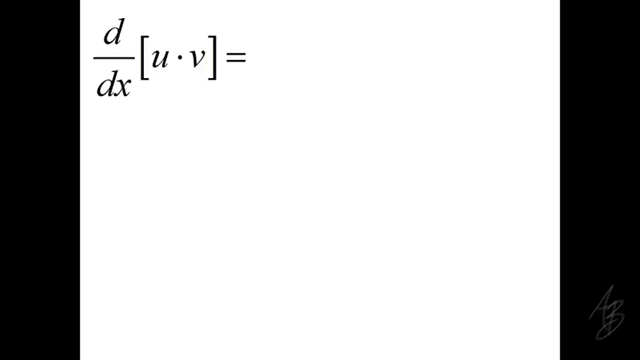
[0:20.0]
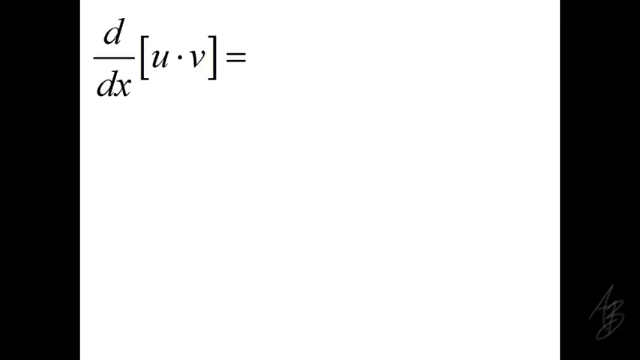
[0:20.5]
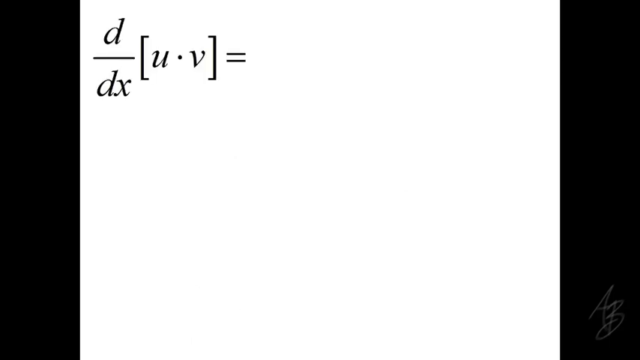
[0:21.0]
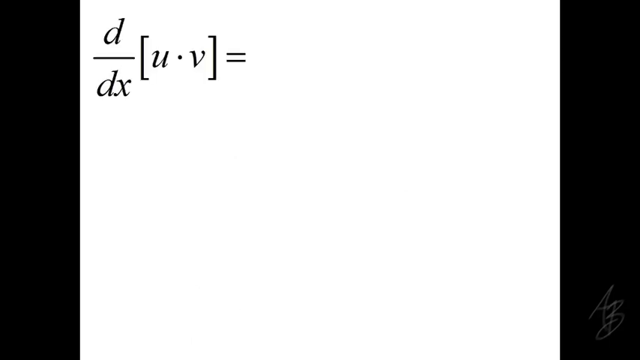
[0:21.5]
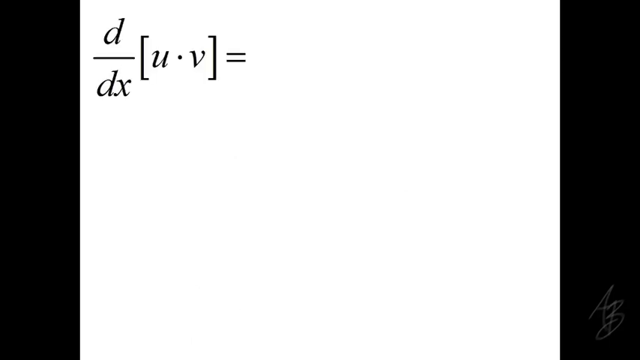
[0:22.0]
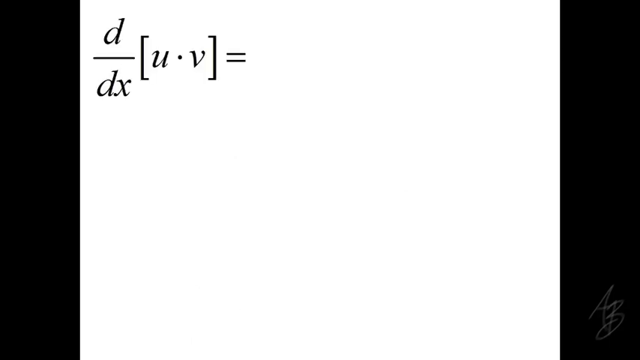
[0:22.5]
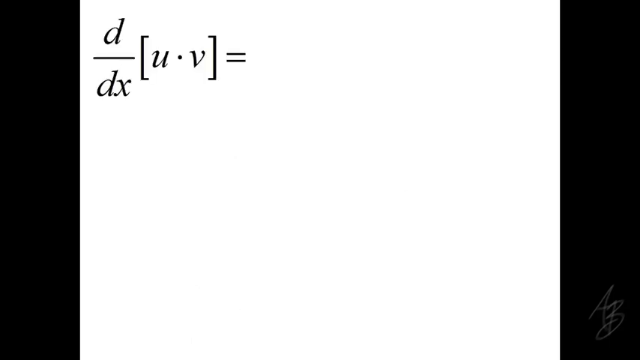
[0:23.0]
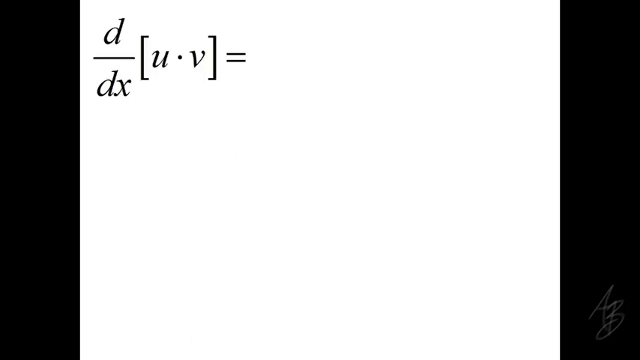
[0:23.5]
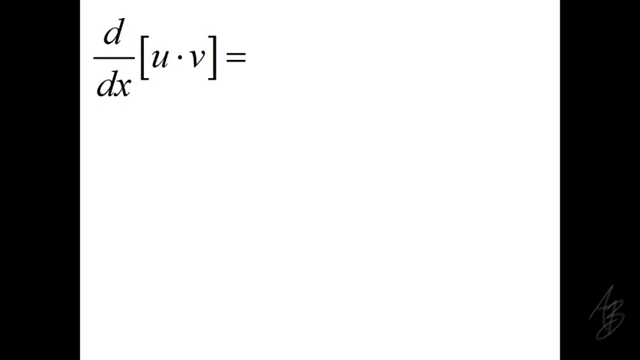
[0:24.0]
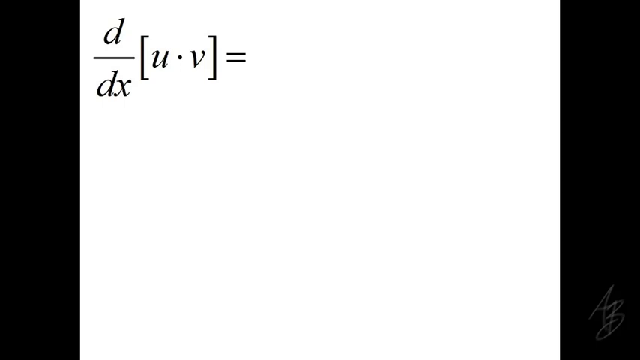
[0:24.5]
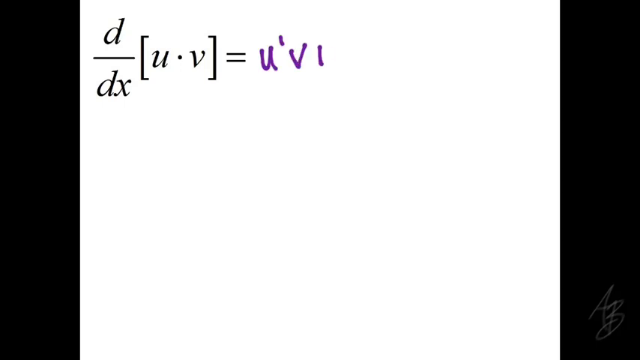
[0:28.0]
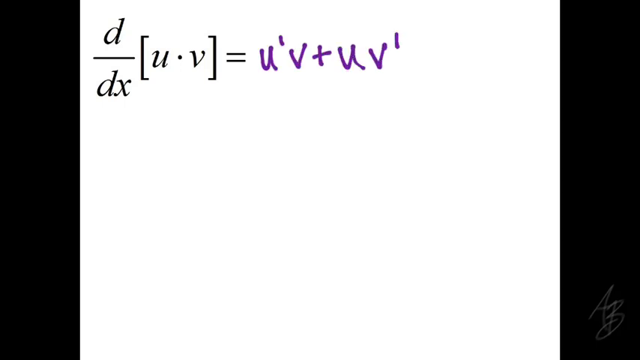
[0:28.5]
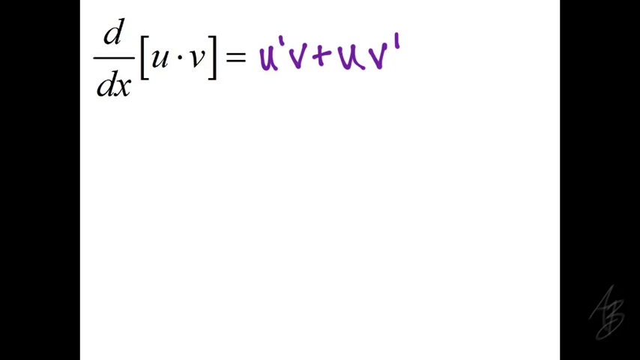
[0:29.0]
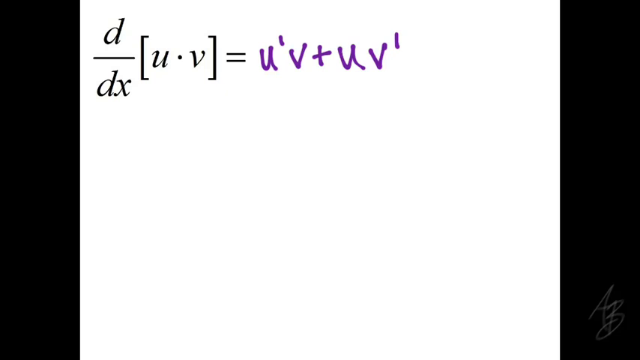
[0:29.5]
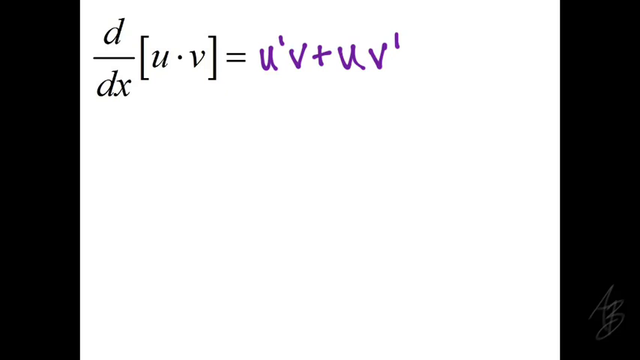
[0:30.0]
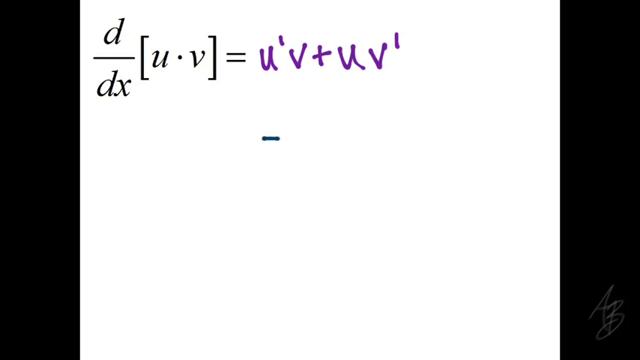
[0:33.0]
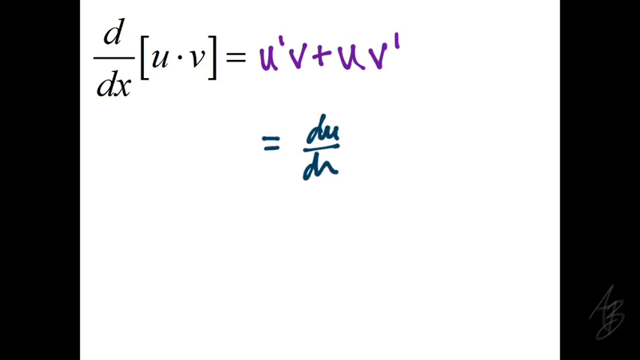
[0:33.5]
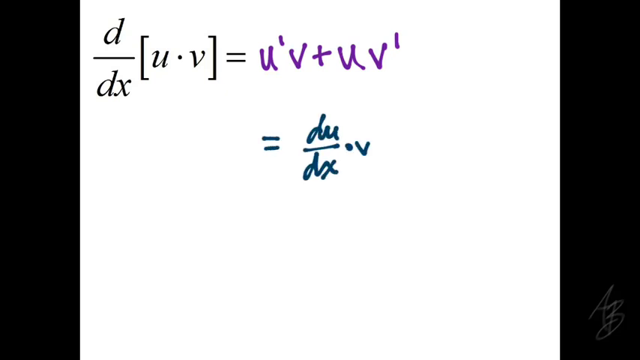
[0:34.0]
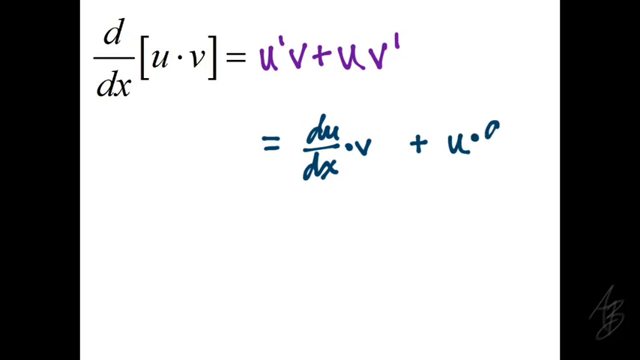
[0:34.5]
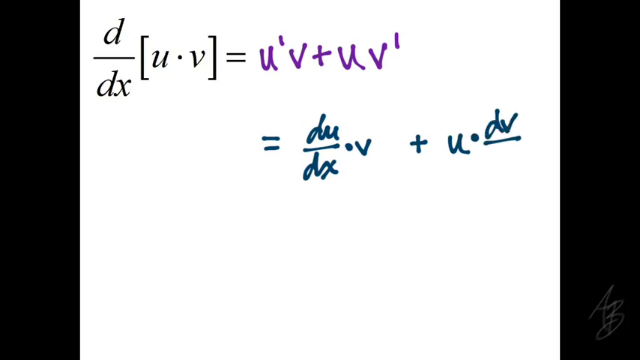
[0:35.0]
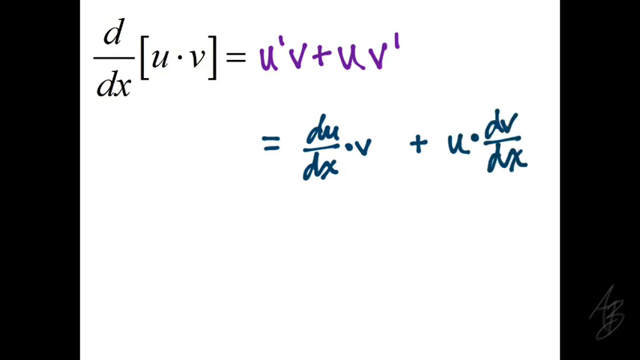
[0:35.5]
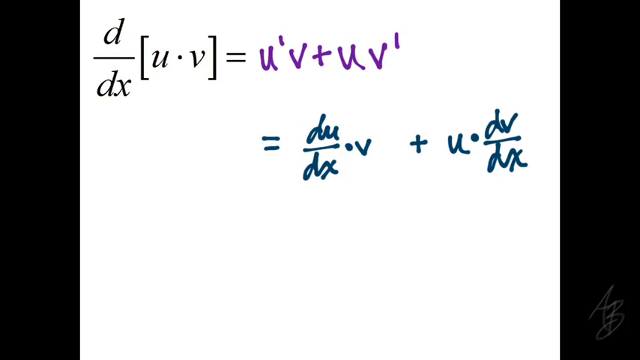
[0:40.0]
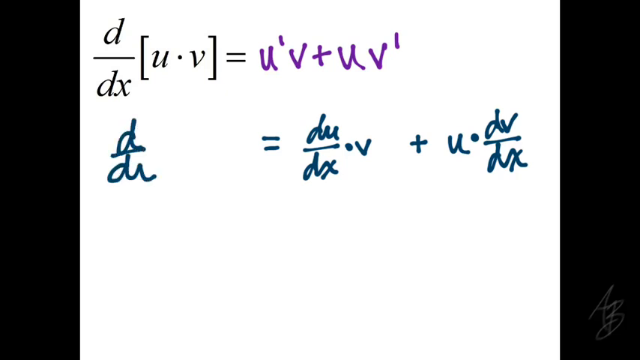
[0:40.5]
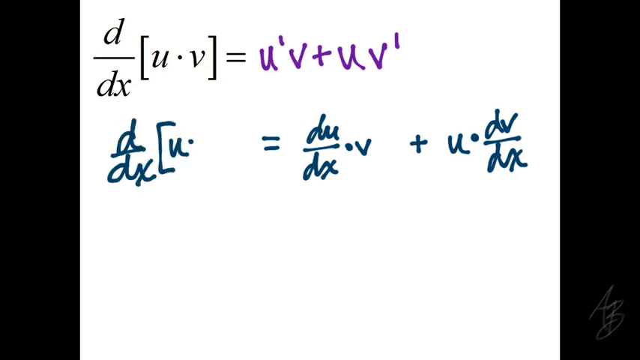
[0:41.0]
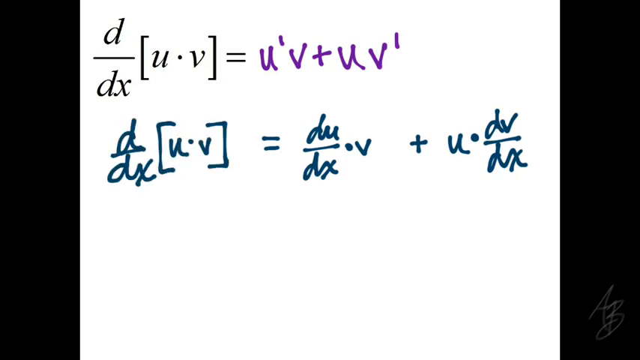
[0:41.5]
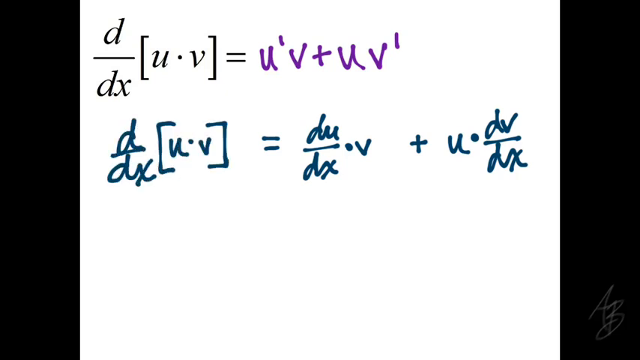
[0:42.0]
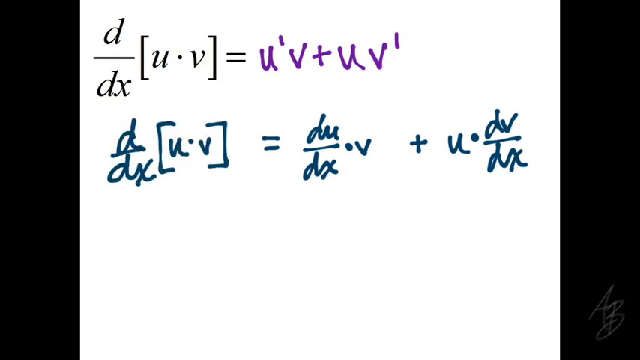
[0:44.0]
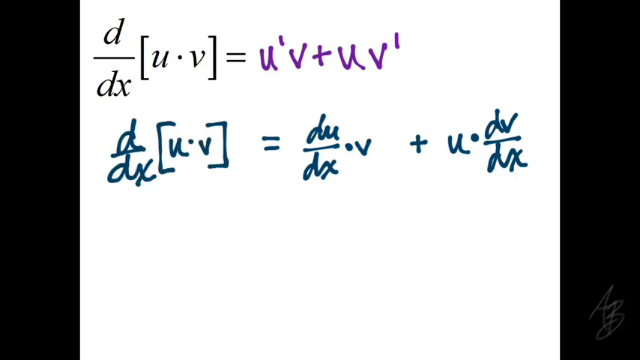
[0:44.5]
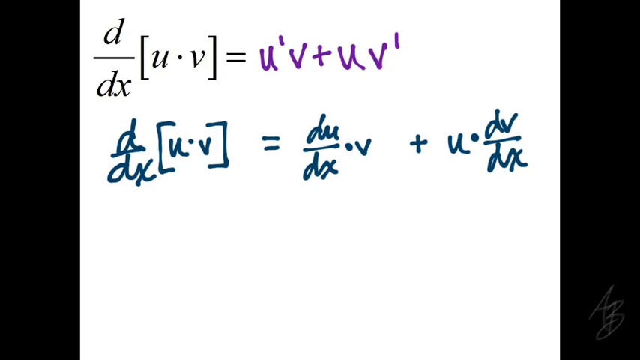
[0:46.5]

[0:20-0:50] The expression d over dx, open bracket, u times v, close bracket, equals continues, and in purple handwriting with a marker, u prime times v plus u times v prime is added as the other side of the equation. On the next line, an equal sign is drawn; to its right is du over dx times v plus u times dv over dx, and on its left the felt pen draws d over dx, open bracket, u times v, close bracket. Unlike the purple felt marker of the first line, this second line is written in what appears to be an aqua navy blue or dark aqua green color. The handwritten text does not suddenly appear on the screen; it appears as if someone is writing it in real time, with the ink flowing onto the paper.